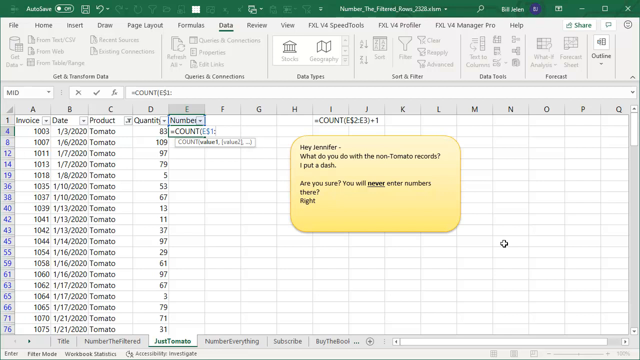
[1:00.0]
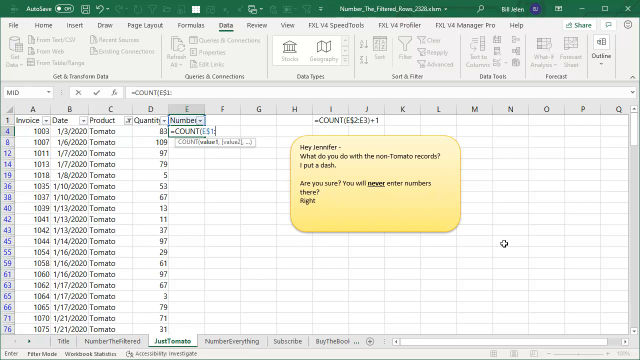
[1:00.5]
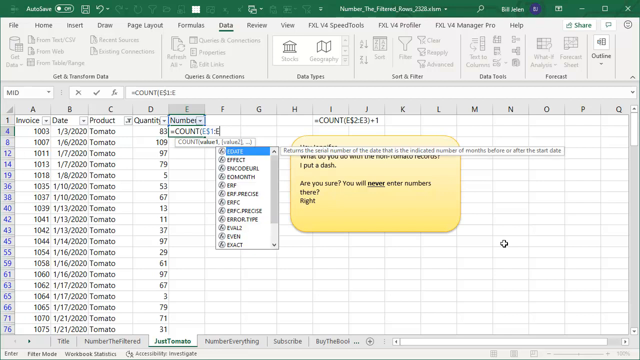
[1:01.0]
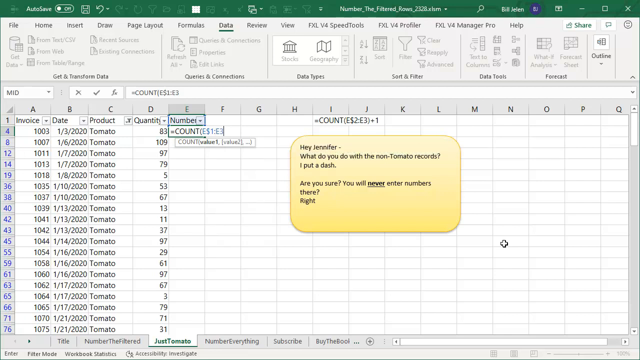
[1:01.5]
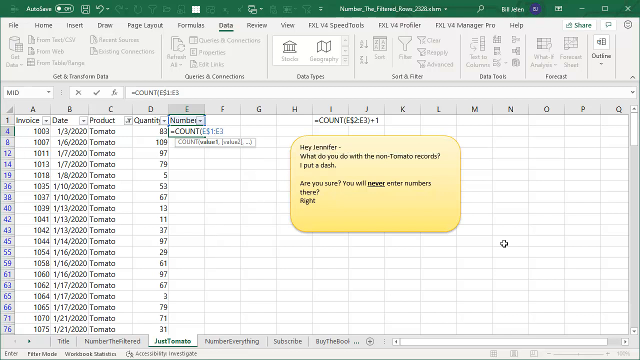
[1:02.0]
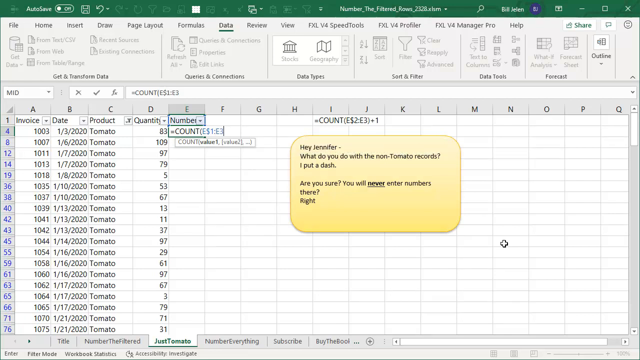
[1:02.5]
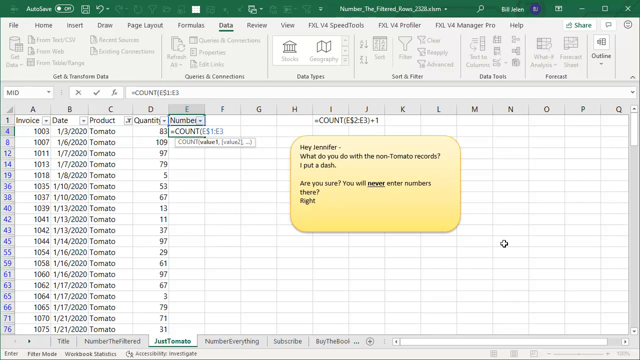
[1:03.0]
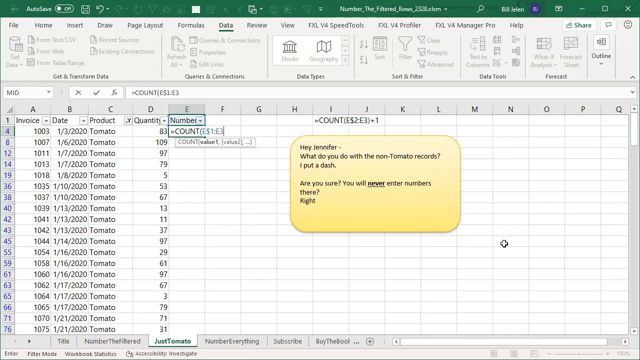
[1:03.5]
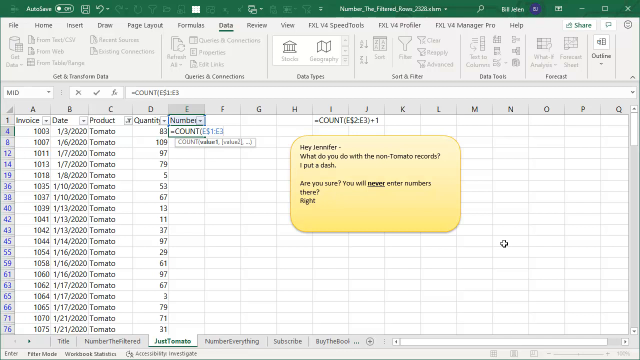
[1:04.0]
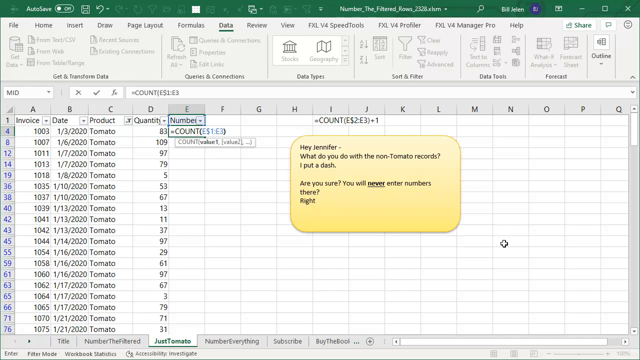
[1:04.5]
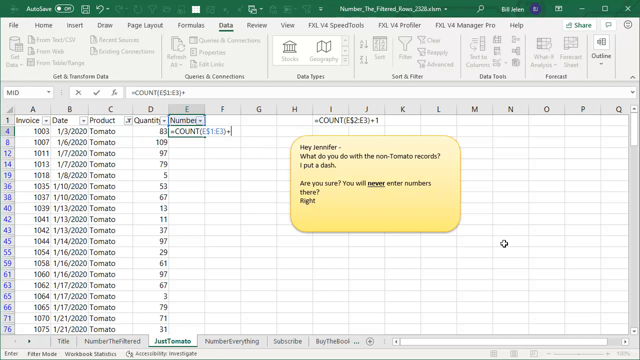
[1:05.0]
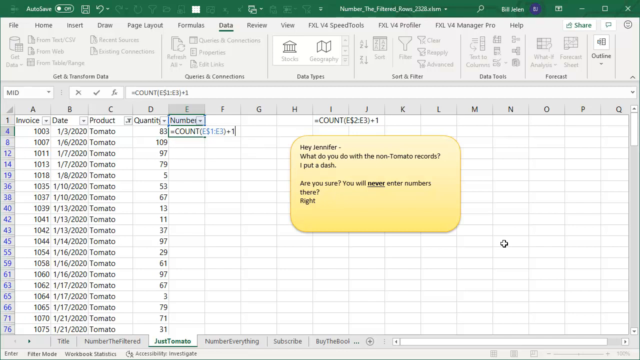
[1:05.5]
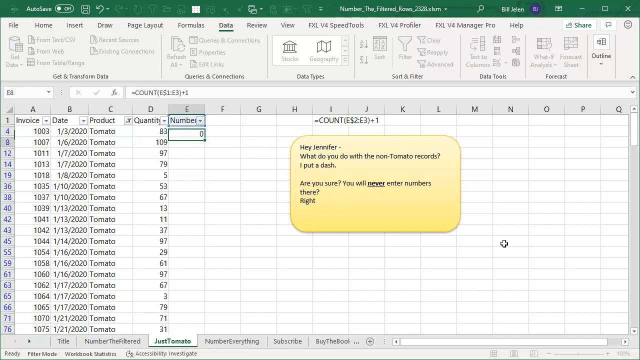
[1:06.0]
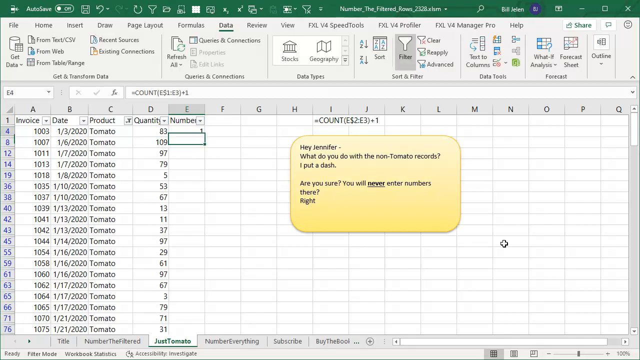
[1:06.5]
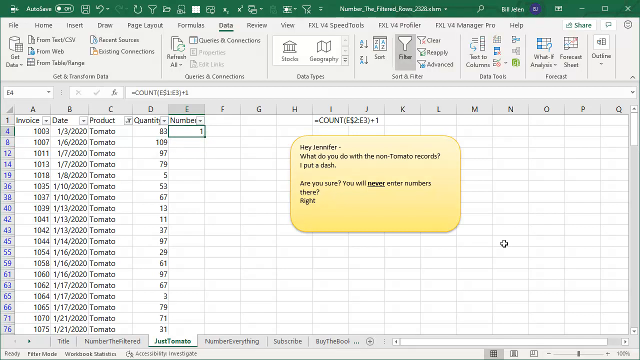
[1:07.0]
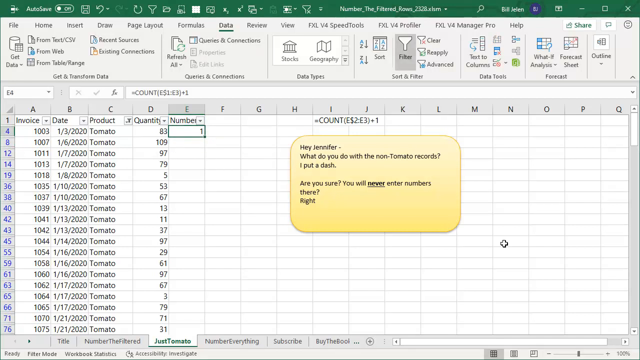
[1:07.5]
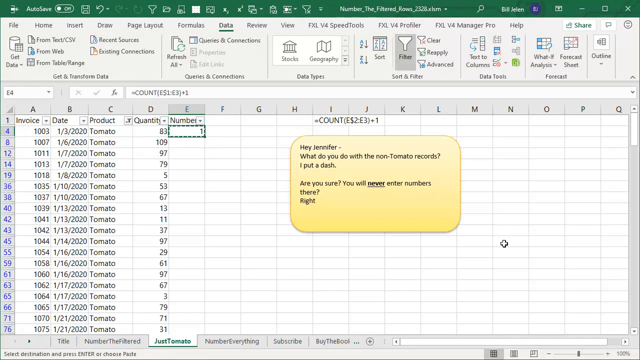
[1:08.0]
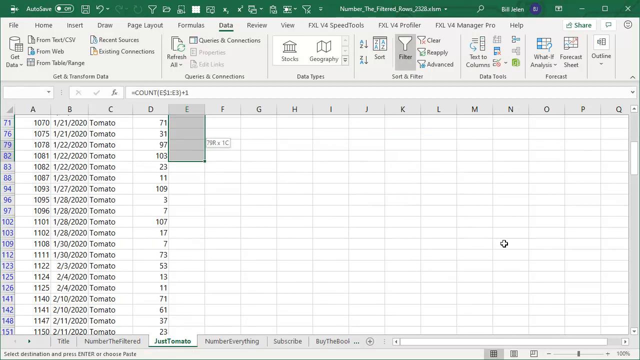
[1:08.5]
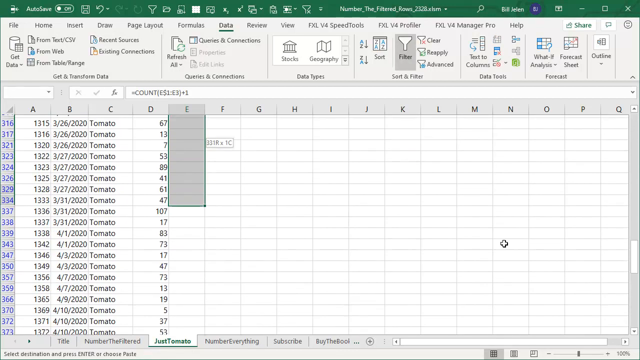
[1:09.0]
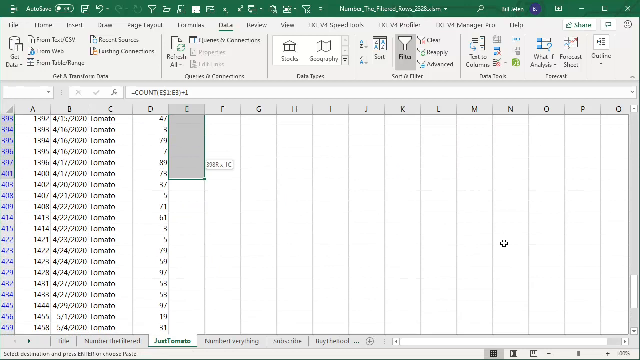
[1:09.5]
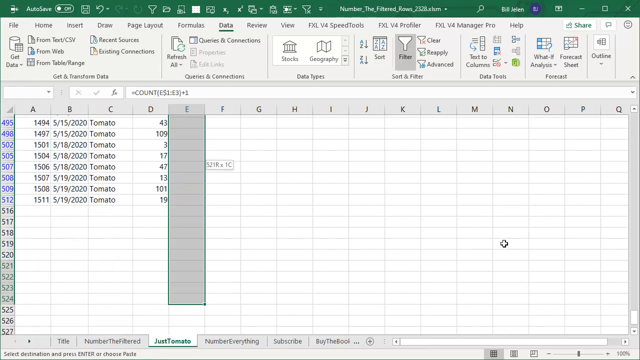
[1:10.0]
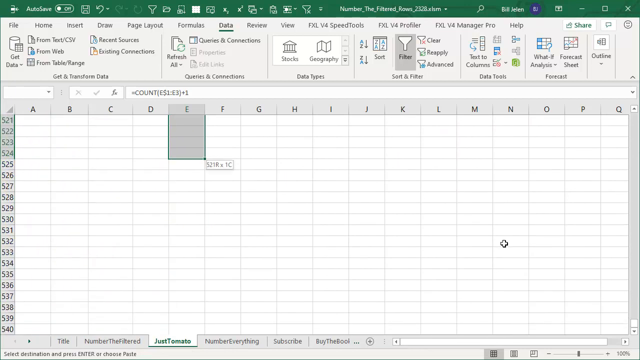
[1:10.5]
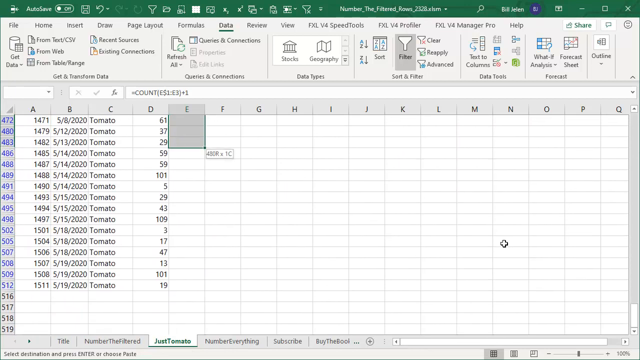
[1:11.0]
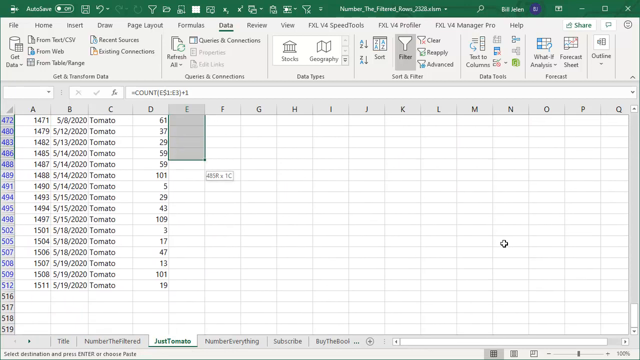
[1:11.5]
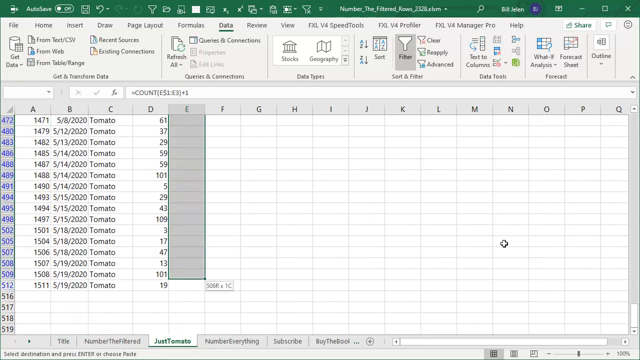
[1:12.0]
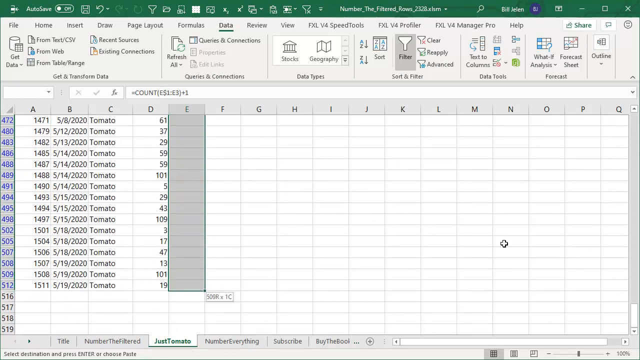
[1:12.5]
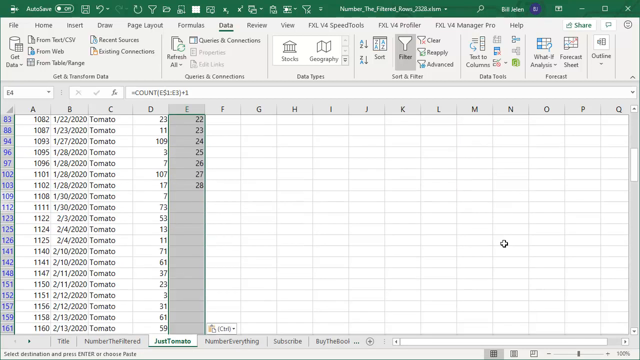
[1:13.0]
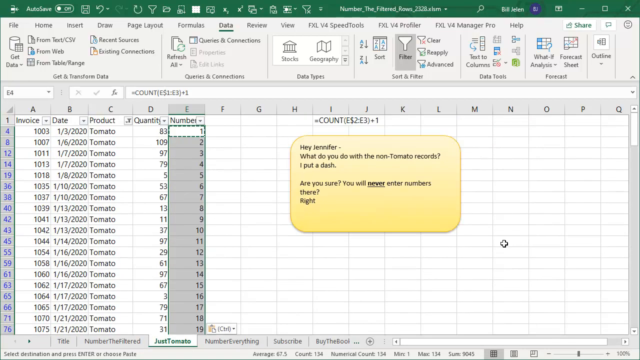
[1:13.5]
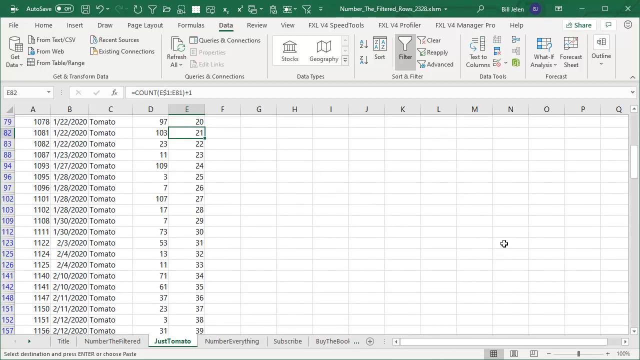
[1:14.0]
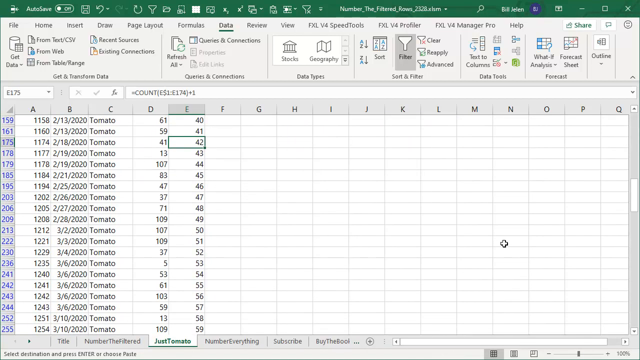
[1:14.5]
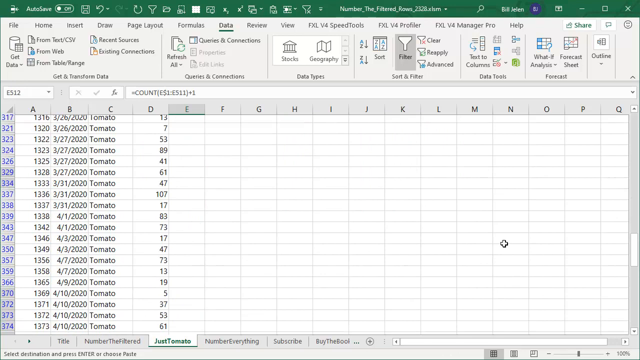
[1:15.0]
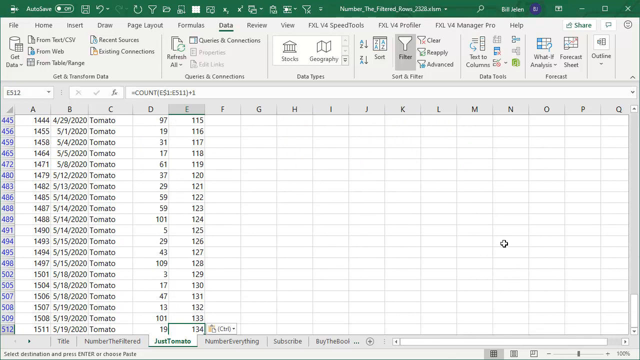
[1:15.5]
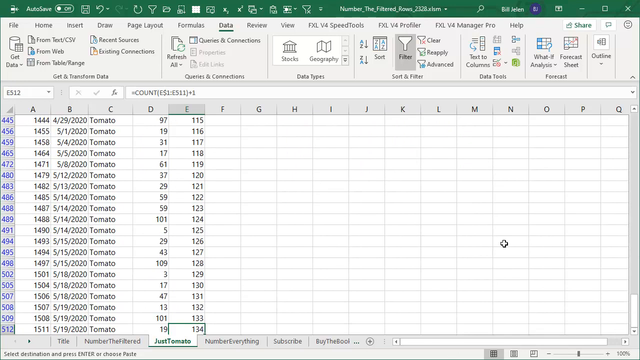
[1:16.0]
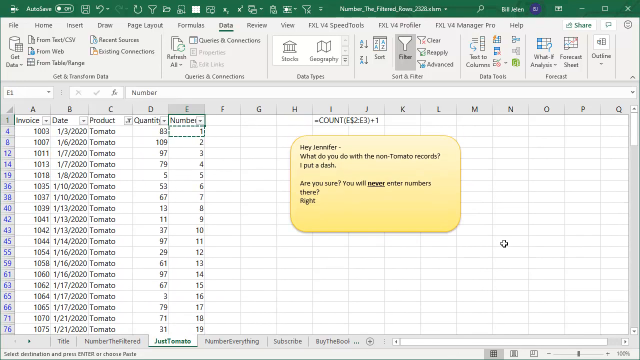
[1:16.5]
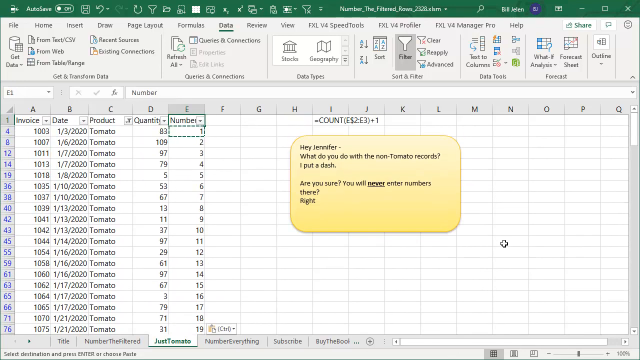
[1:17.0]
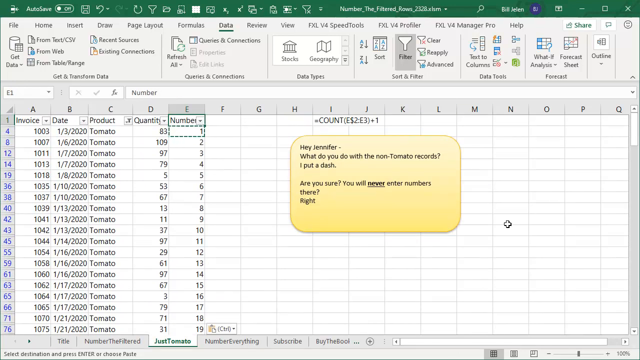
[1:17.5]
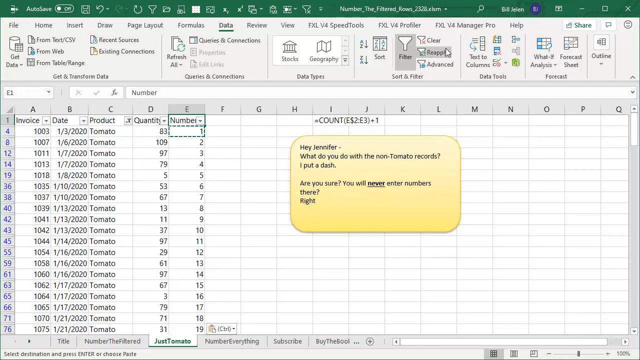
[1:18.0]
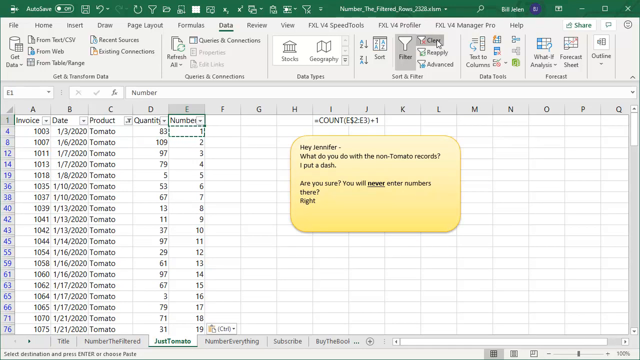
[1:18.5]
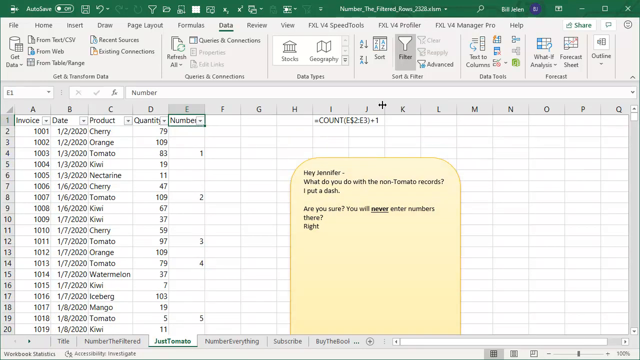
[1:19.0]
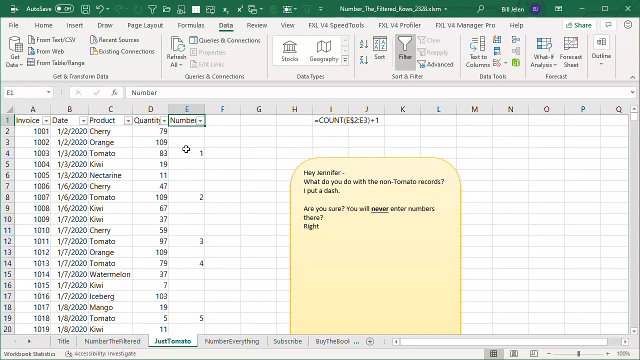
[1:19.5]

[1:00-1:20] He keeps typing in E4, entering E$1:E3, with the cursor flashing after it. He closes the parentheses, types plus one, and the cell changes to show 1 instead of the function. In the formula bar at the top, to the right of "fx," a text field still shows the formula even though it is not visible in the cell. He then scrolls, highlighting the E column far down into the 500s, goes back up, does a number of actions, and suddenly copies a batch of numbers. Back at the top, a dotted line surrounds the number one: E4 holds 1 with a green animated dotted line around its border. The numbers then run 2 through 19 continuously down the column. He clicks "clear" at the top, to the right of the darker gray filter button, and a green border appears around E1, which now has a drop-down for number.